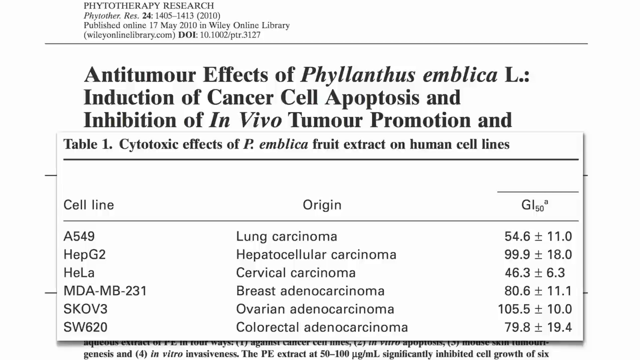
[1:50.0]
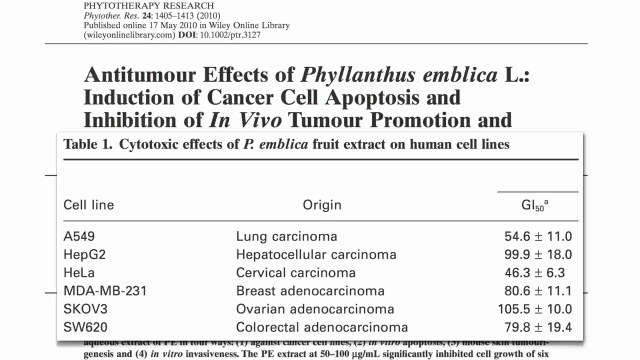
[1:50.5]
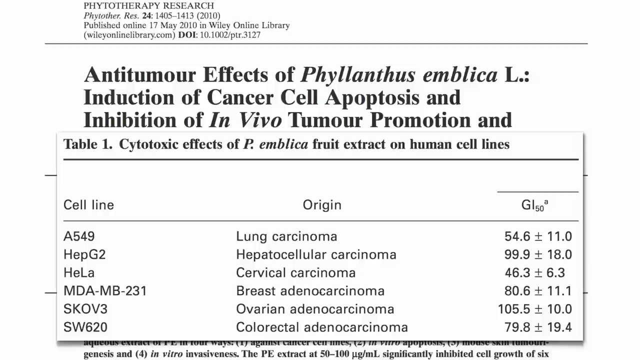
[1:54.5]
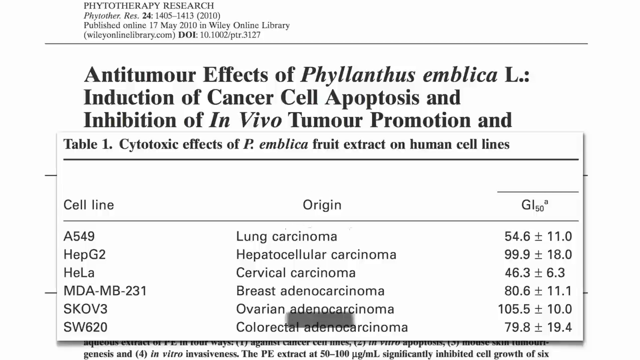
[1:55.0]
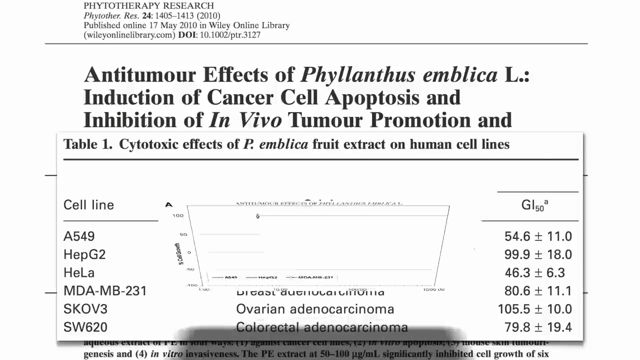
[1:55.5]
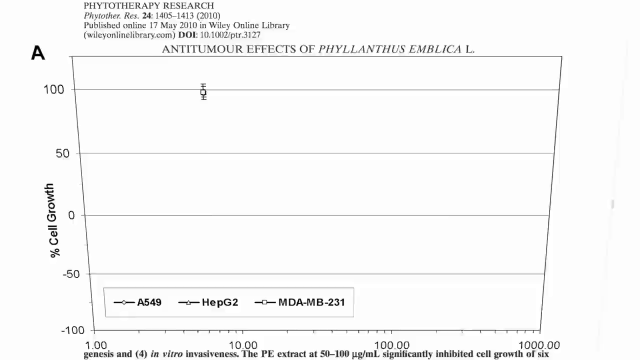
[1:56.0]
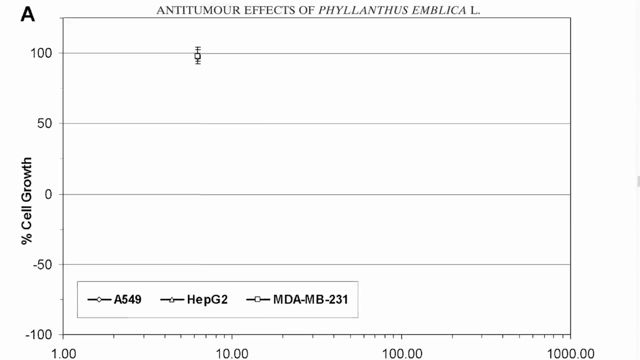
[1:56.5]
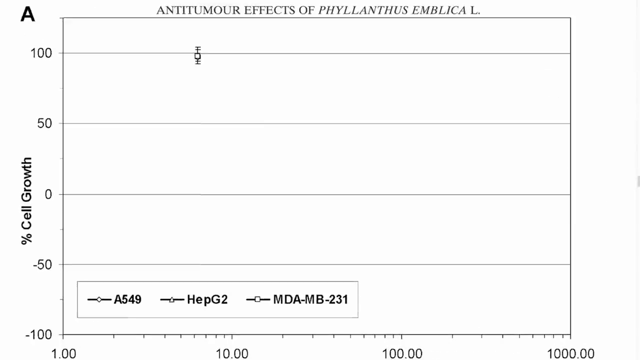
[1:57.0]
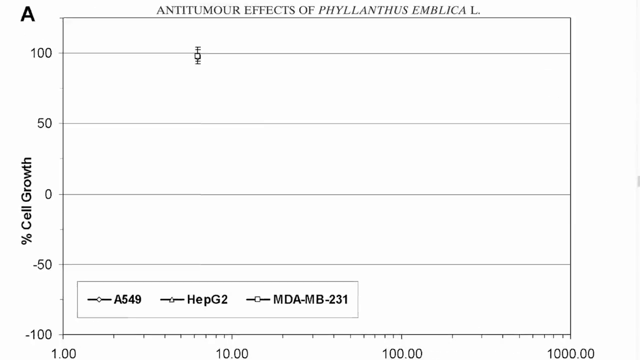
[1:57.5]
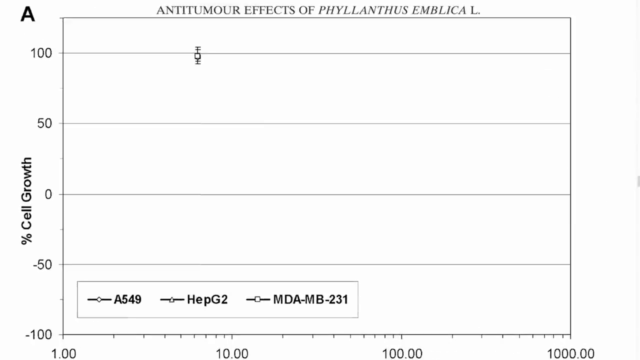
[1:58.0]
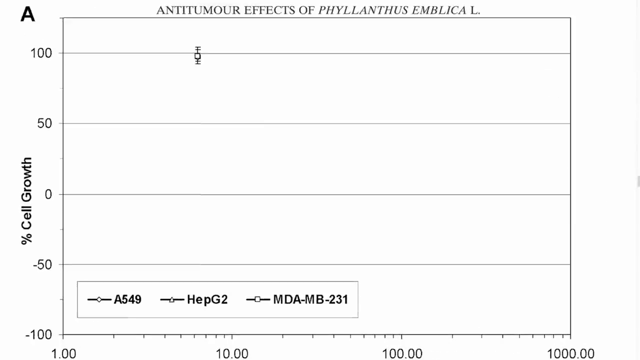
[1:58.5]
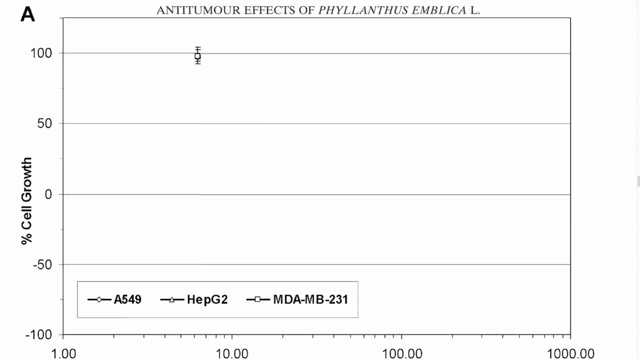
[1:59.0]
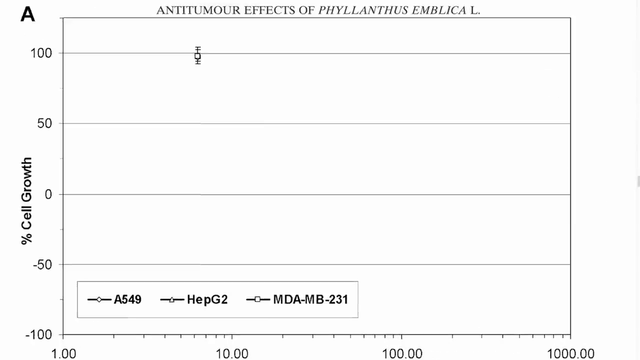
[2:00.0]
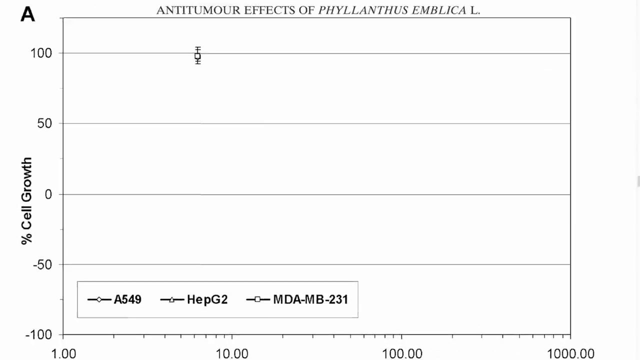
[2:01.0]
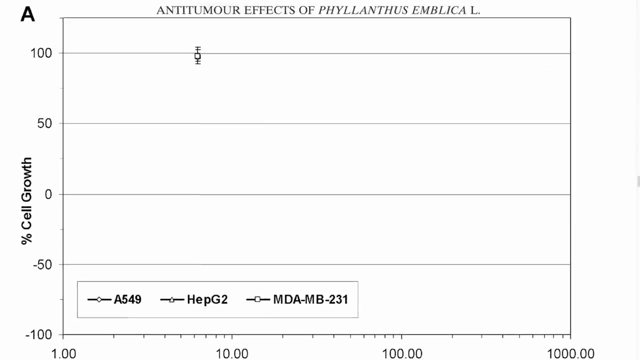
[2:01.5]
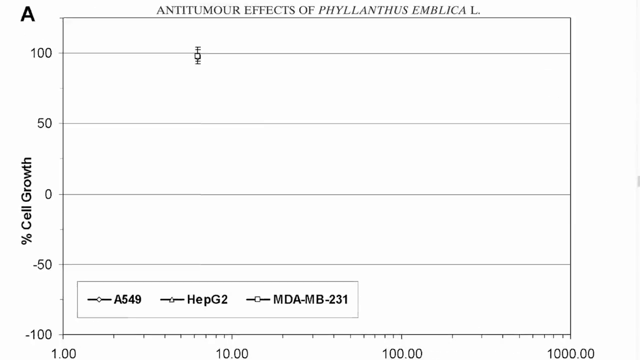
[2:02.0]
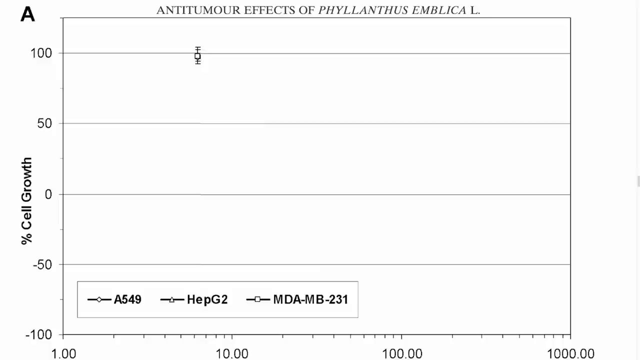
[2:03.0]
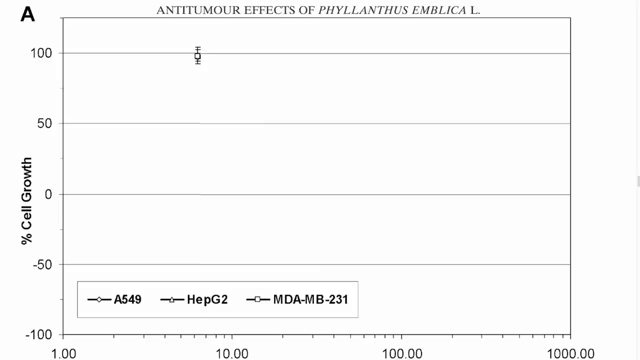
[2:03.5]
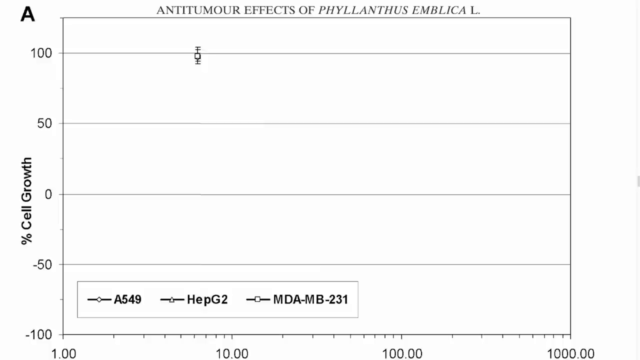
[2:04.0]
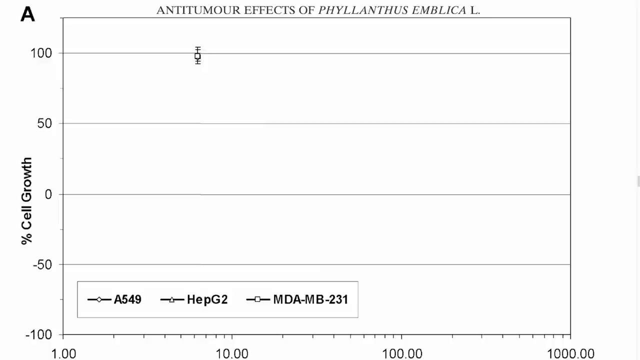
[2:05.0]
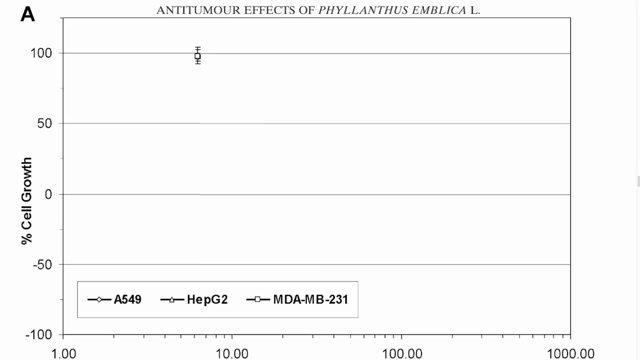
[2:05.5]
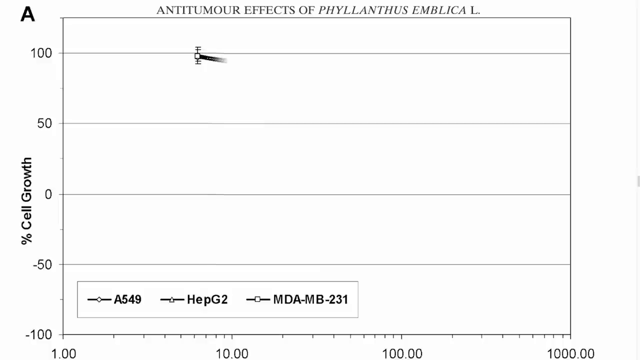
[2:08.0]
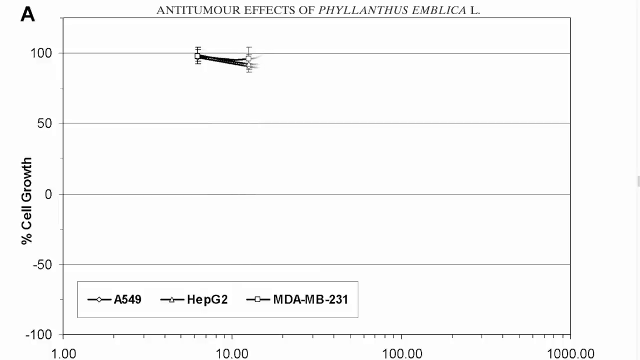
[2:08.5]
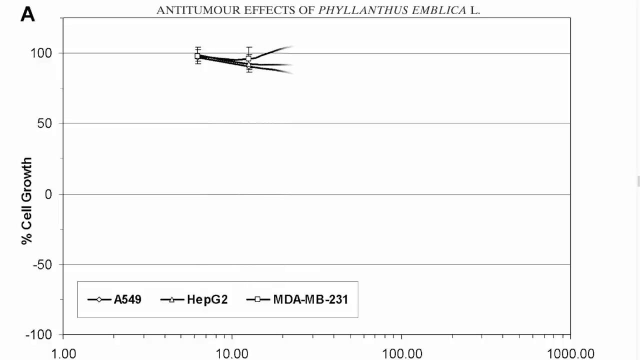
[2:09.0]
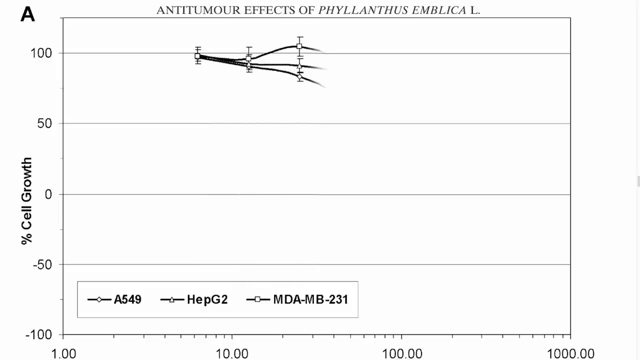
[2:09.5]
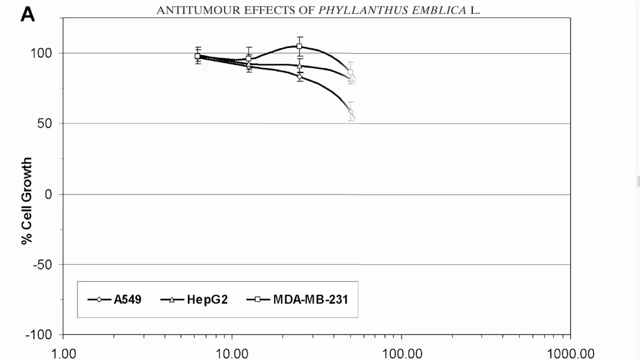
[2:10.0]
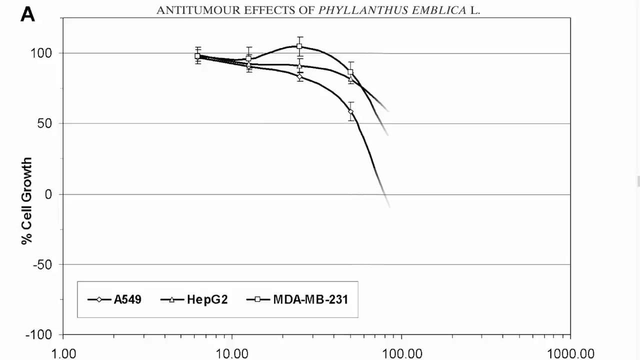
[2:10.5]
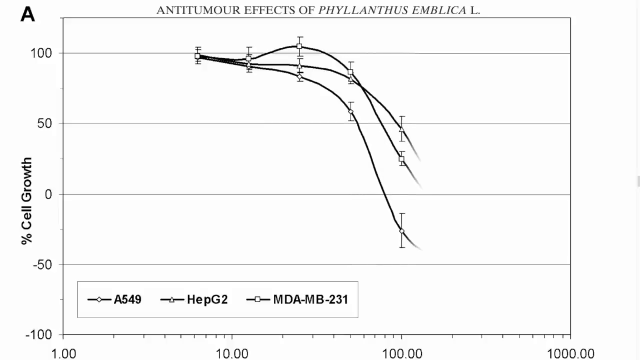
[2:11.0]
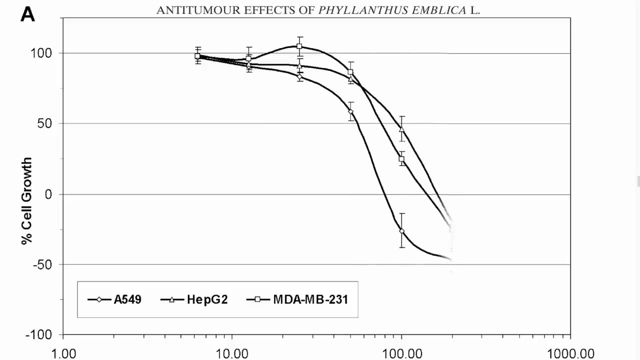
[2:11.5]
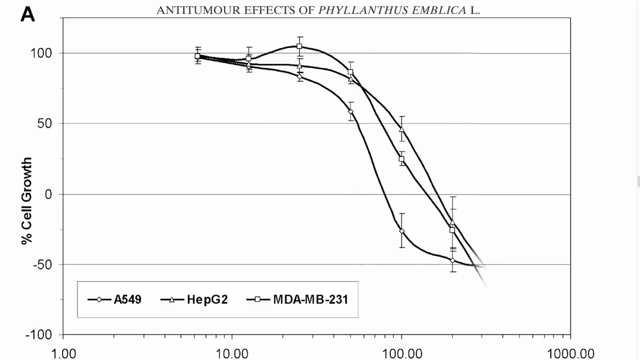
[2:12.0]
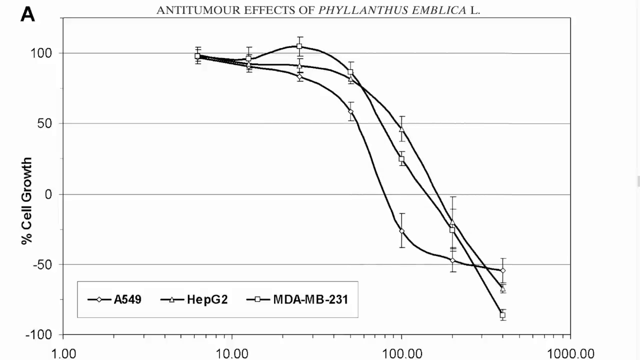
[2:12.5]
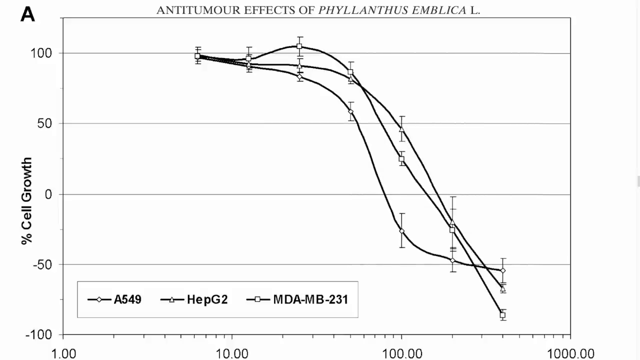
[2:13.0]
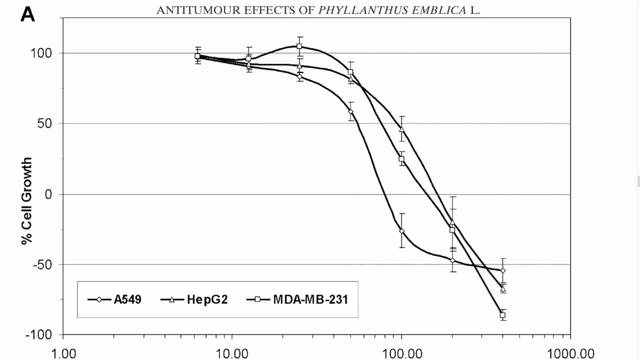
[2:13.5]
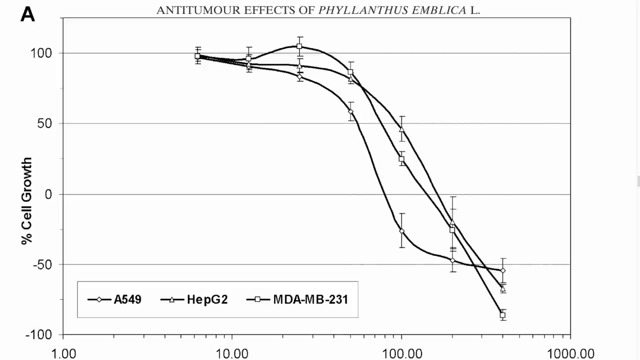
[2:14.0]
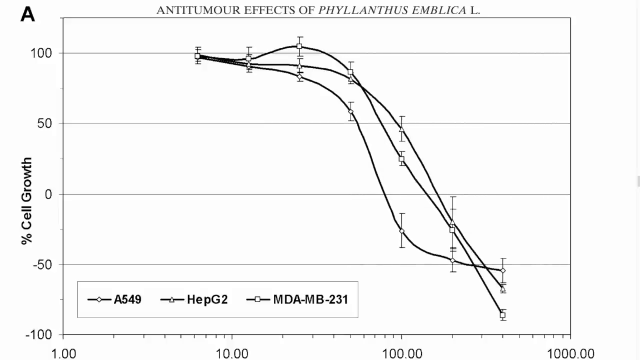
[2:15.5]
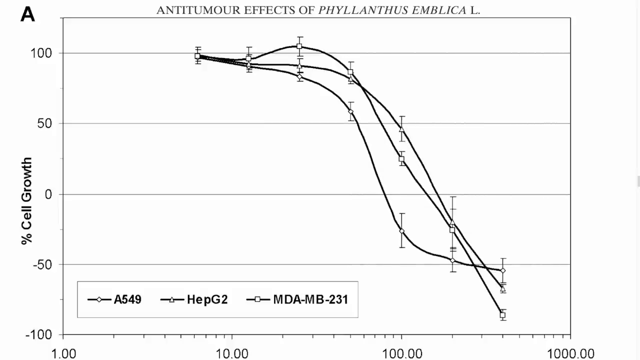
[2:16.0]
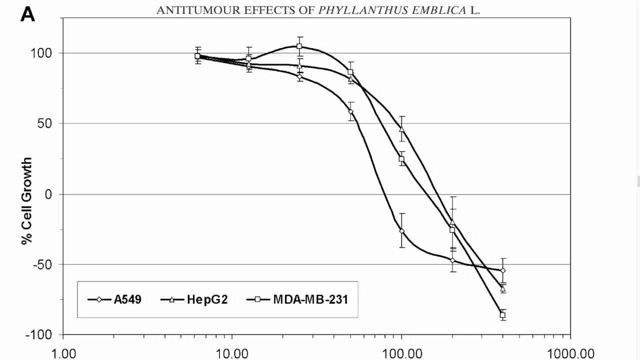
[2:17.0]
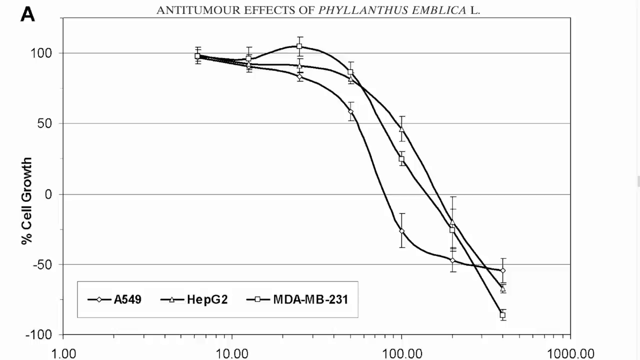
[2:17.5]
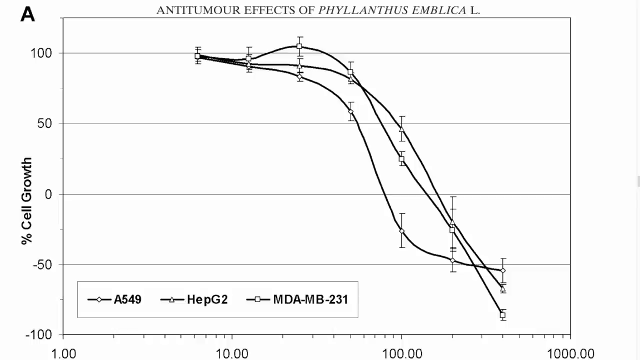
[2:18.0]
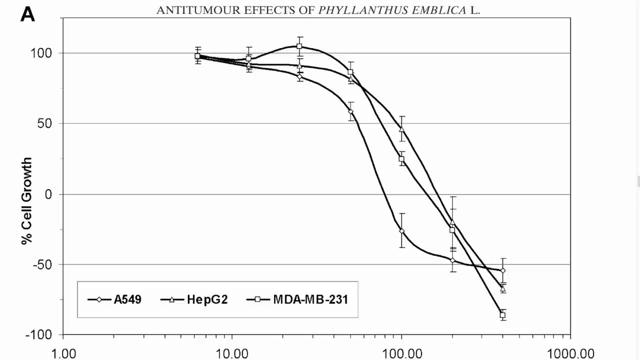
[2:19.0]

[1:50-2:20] An article is titled "Antitumor Effects of Phyllanthus Emblica L, Induction of Cancer Cell Apoptosis and Inhibition of In Vivo Tumor Promotion..."; the rest of the title and the article are covered by a pop-up giving information on a table. It reads "Table 1, Cytotoxic Effects of P.emblica Fruit Extract on Human Cell Lines", with data beneath in three columns headed "cell line", "origin" and "GI 50" with a small superscript a, and different information listed underneath. Then a chart titled "anti-tumor effects of phyllanthus emblica L" appears. The left margin reads "percentage cell growth", going upward from -100 to -50, 0, 50 and 100. Along the bottom are a few small ticks with the numbers 1.00, 10.00, 100.00 and 1,000.00. A key at the bottom of the graph shows the different lines: one with a small circle marker, labeled "A549"; one with what looks like a triangle, labeled "HepG2"; and one with what looks like a square, labeled "MDA-MB-231". The lines all start at the same point, around the 100 mark on the left side and the 9.00 area on the horizontal axis, and kind of follow the same path, moving horizontally a bit before breaking apart a little: the square line is highest, while the other two are a bit lower but near each other. Once they reach the 100.00 mark they all slope downward, continuing down and even intersecting around the 800.00 point.